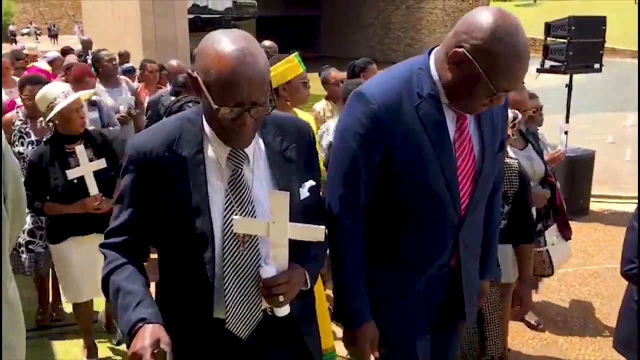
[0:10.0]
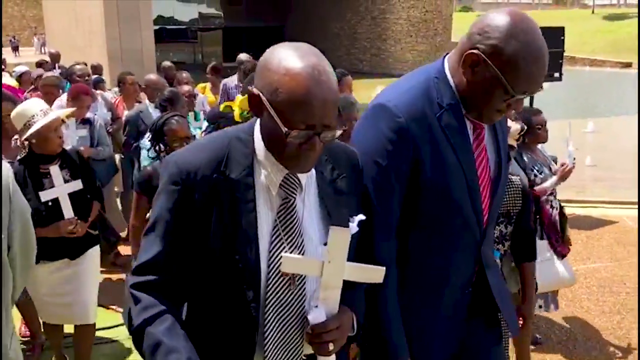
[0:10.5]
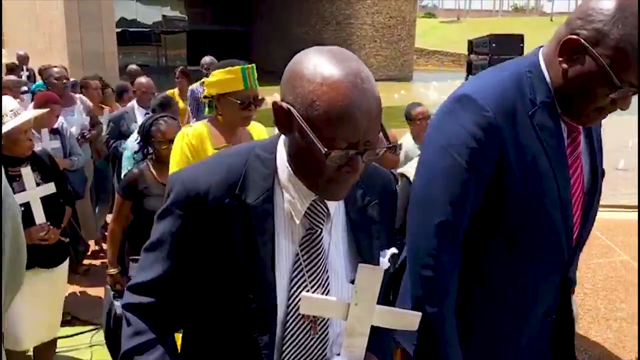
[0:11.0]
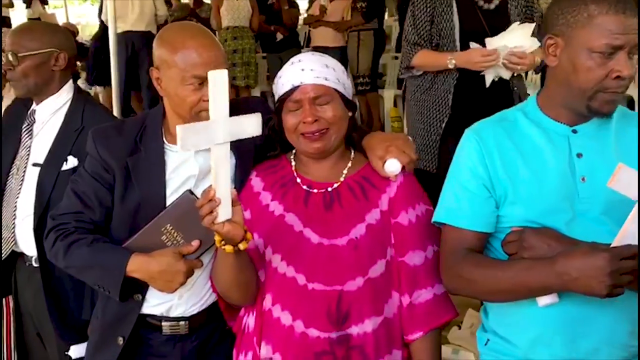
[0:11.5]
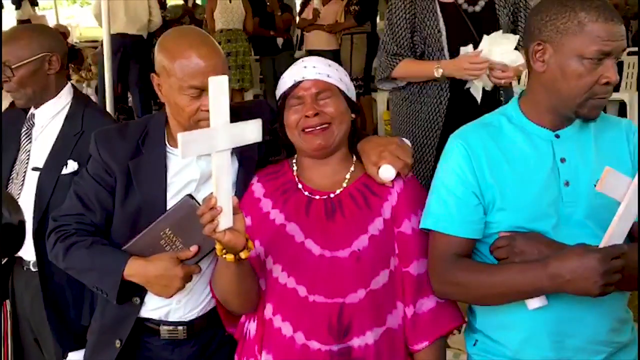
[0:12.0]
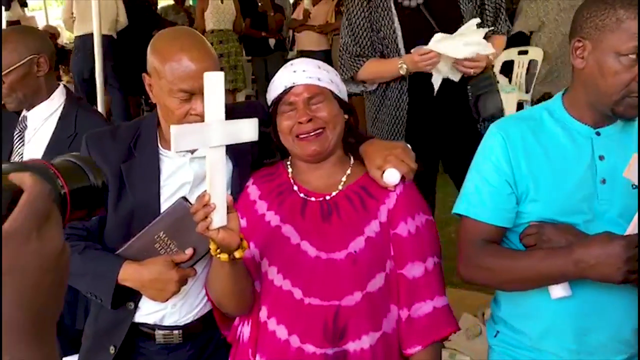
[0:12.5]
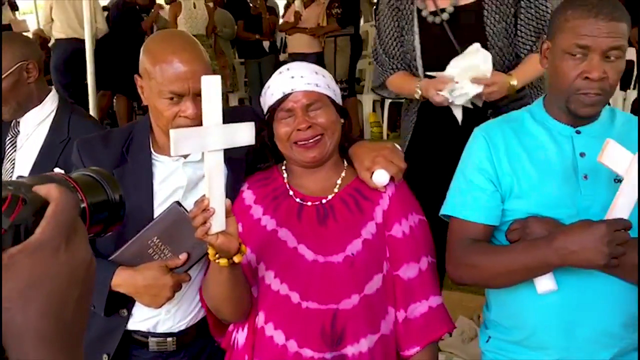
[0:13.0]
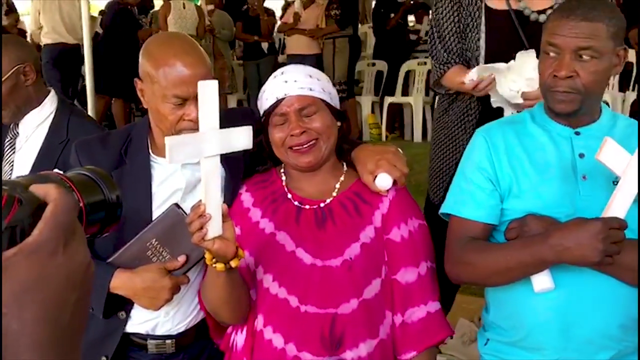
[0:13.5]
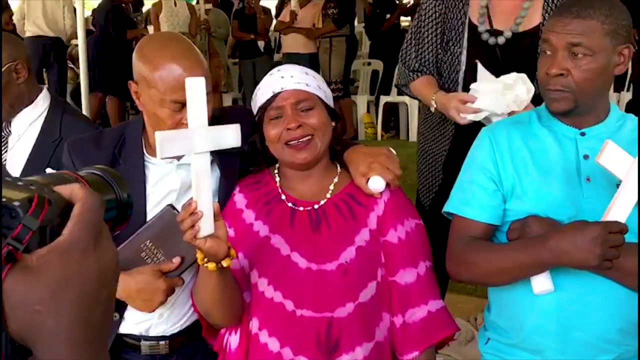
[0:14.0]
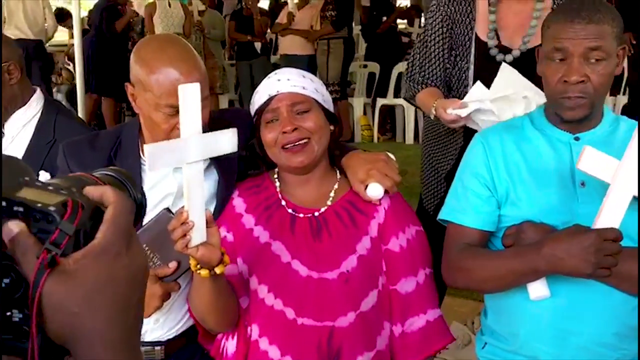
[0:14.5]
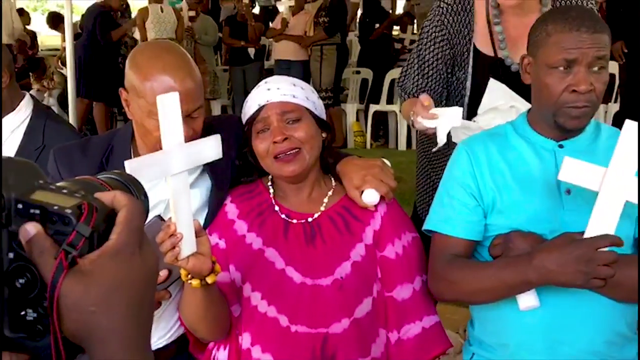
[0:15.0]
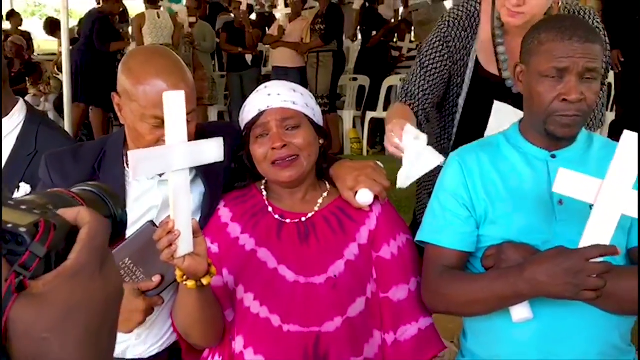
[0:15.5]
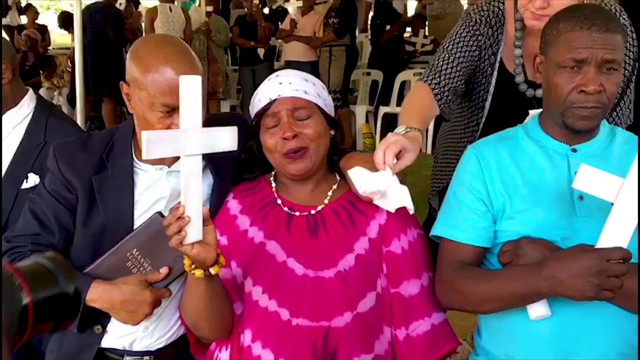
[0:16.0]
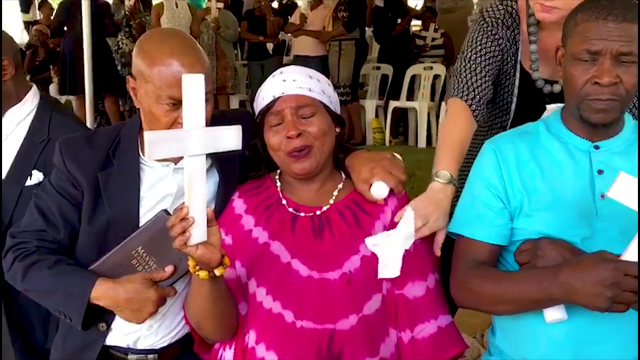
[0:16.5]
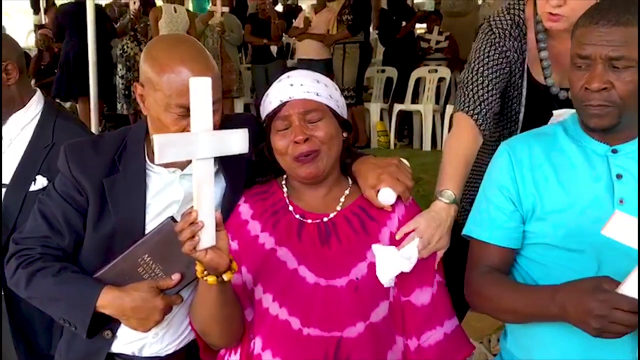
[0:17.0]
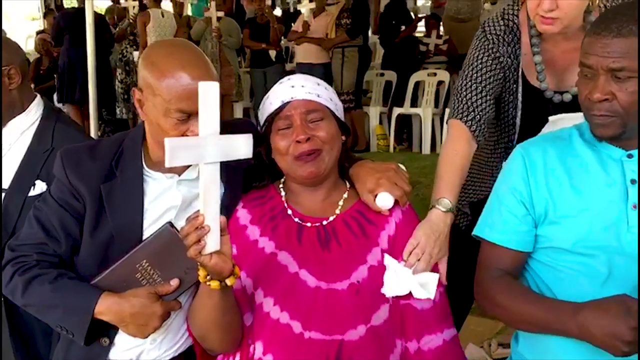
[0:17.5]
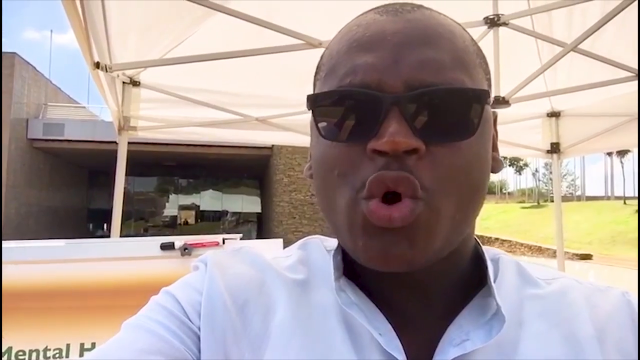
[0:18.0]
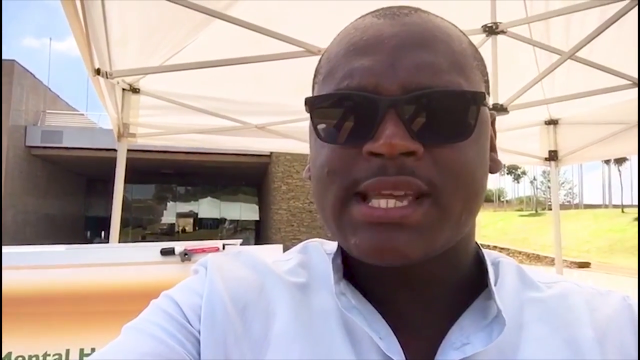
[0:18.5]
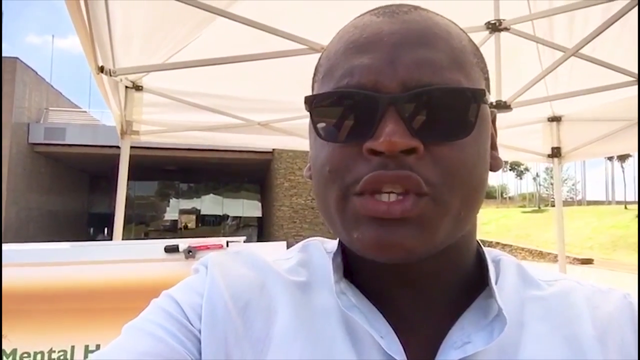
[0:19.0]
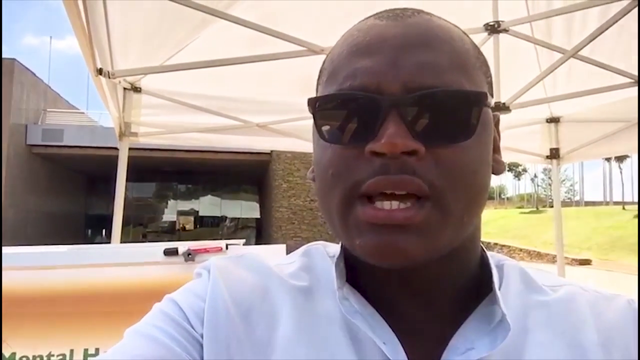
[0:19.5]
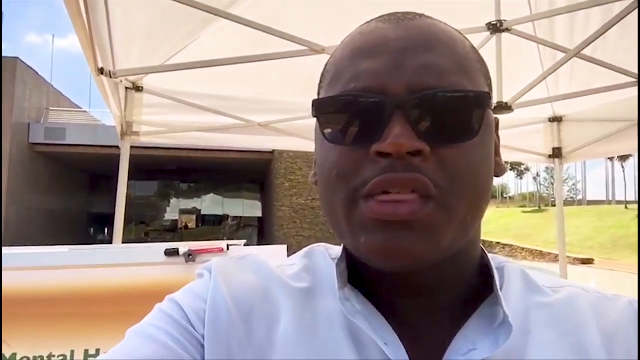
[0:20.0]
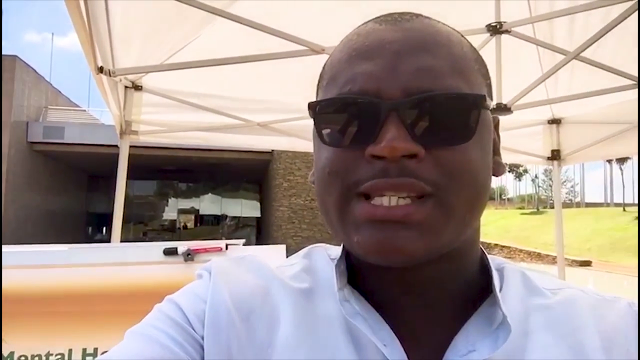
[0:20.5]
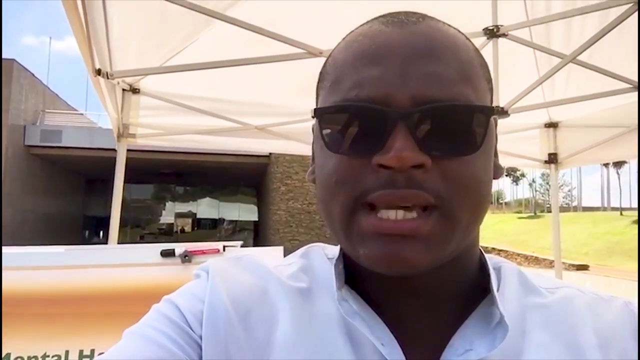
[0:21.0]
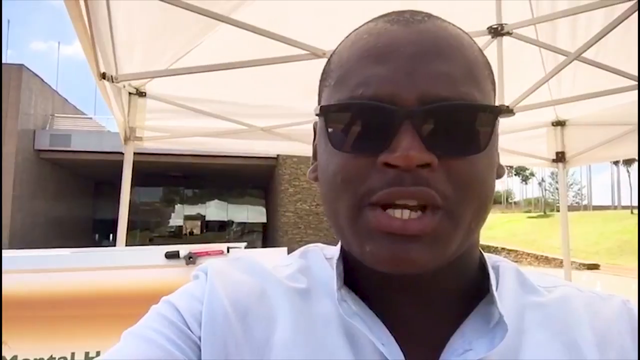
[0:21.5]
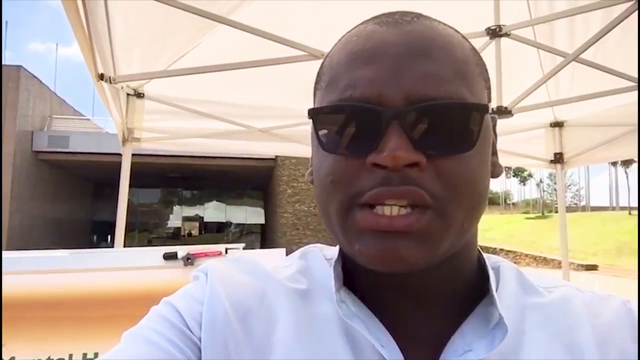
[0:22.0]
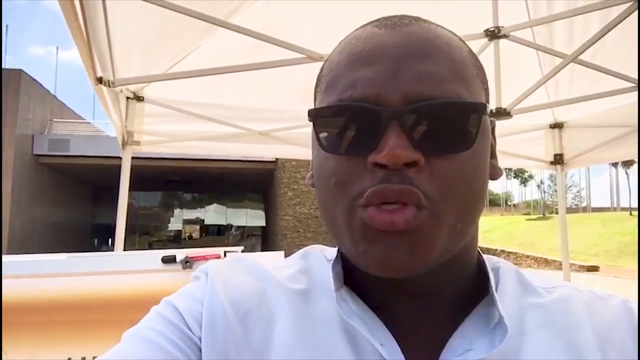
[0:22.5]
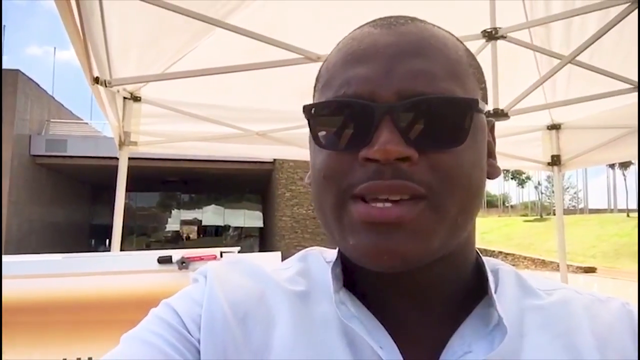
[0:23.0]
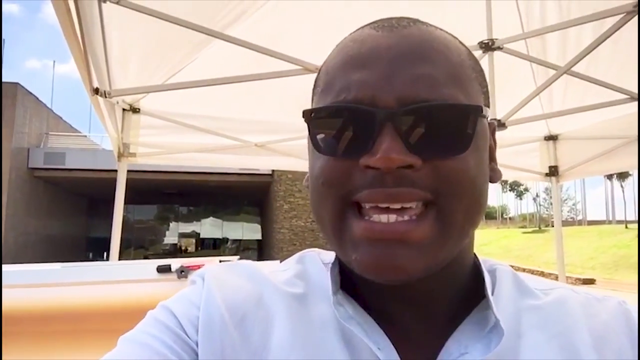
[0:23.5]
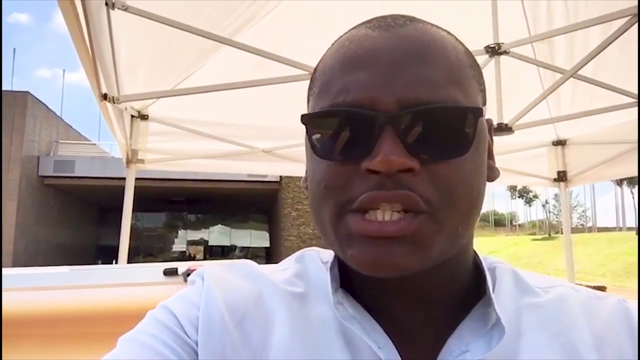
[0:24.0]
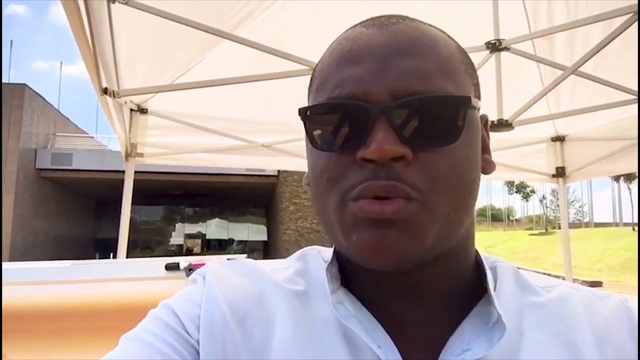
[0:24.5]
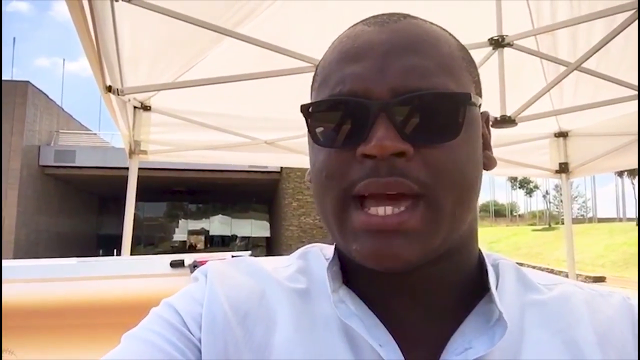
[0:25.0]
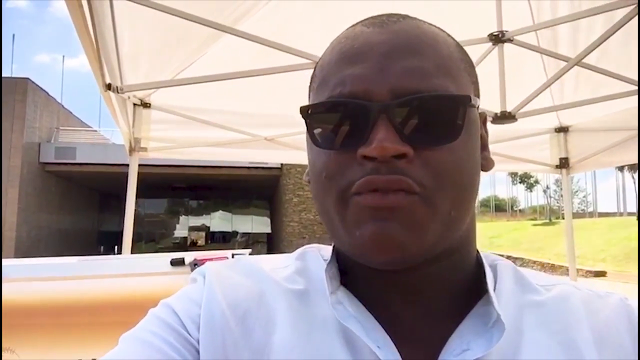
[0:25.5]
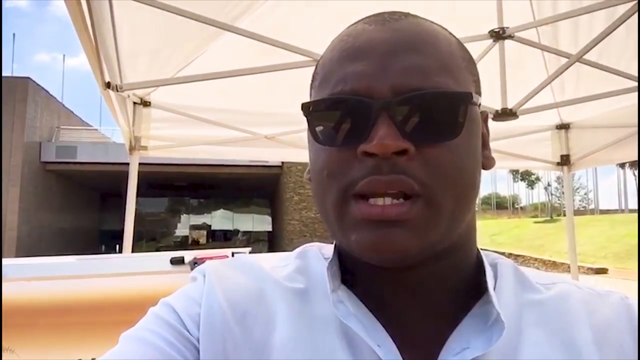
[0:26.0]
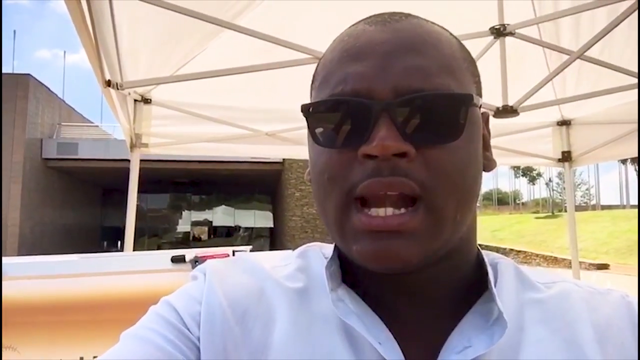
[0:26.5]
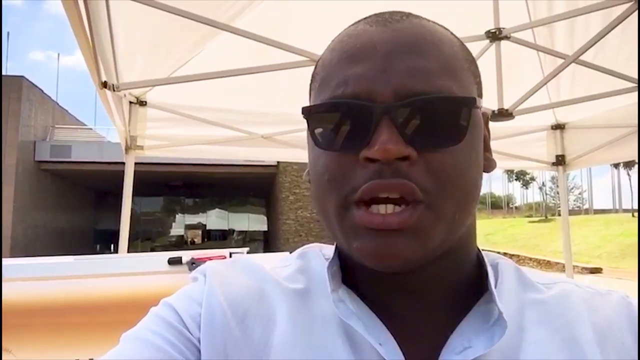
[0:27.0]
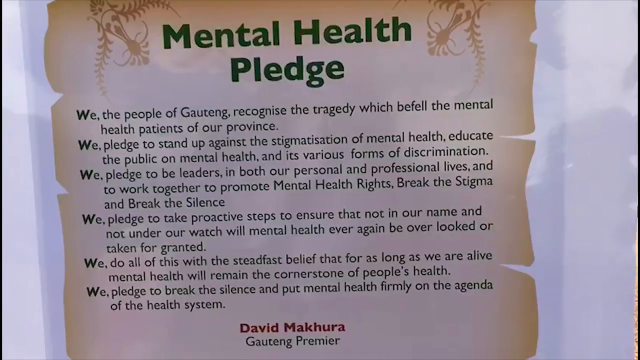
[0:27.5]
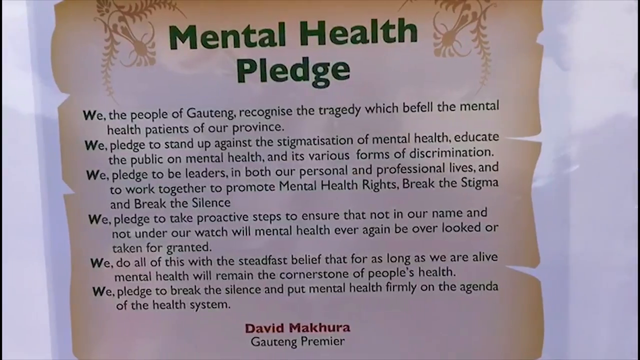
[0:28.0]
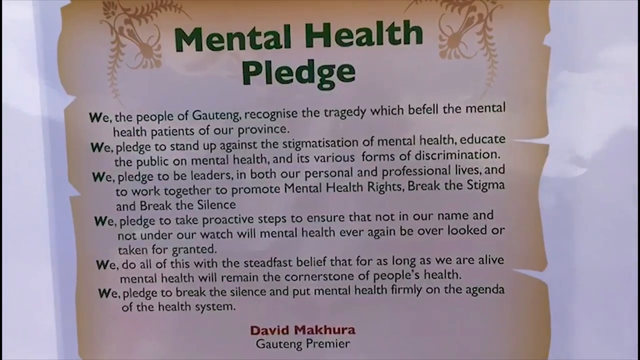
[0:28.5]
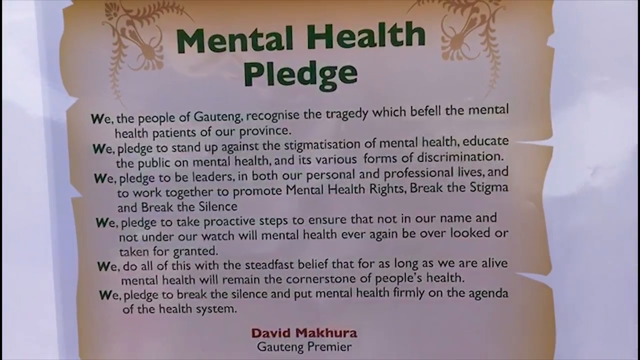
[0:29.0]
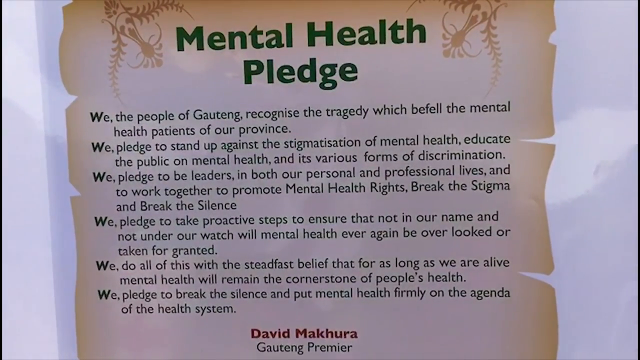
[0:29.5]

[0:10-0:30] The people continue walking, and more people are shown. A woman in a pink outfit appears to be crying as she holds up a cross. Someone is video recording her or taking pictures of her, with a camera pointed at her, and someone else holds up a tissue for her to take. The man in sunglasses who was talking earlier is talking again, still outside, and he talks quite a bit. A picture of a mental health pledge follows; it looks to be on what appears to be an older type of paper, with the wording in green and the paper itself a cream or tan color with little emblems on it. The pledge says things like "we the people of Gauteng recognize tragedy which befell the mental health patients of our province".